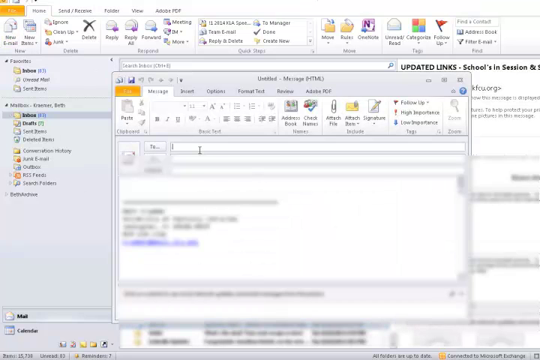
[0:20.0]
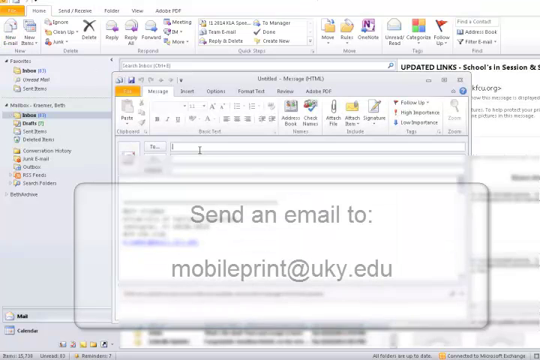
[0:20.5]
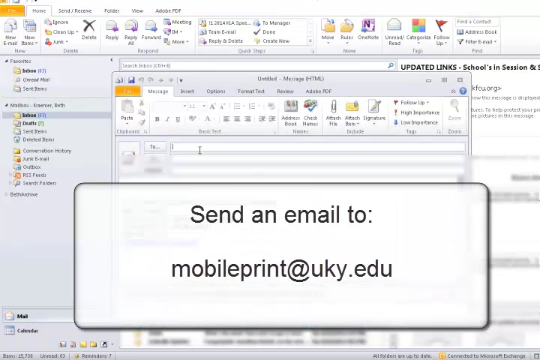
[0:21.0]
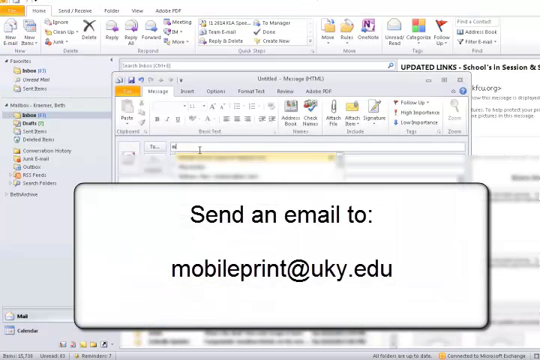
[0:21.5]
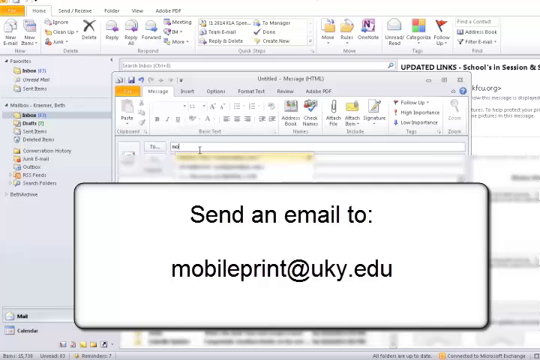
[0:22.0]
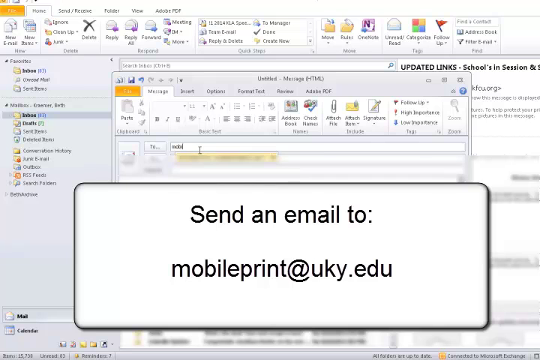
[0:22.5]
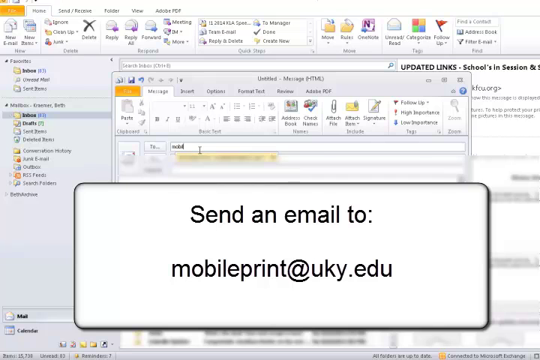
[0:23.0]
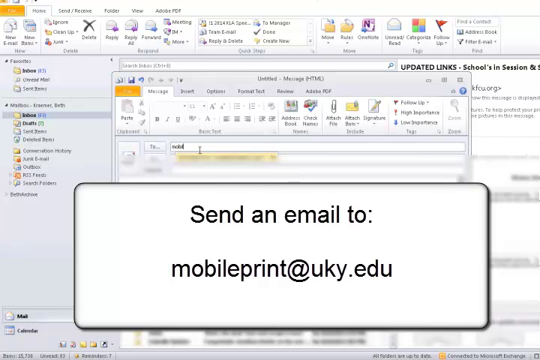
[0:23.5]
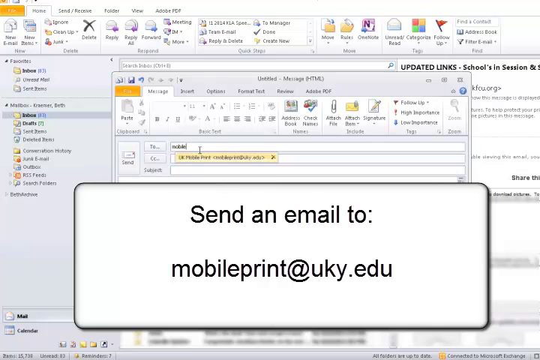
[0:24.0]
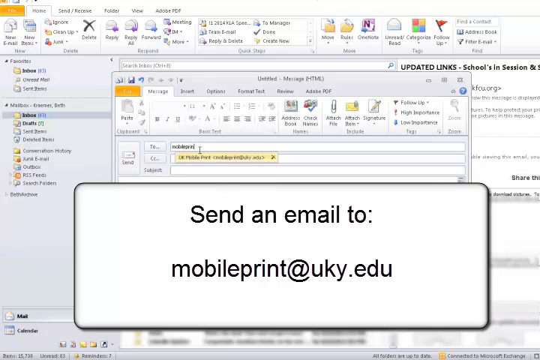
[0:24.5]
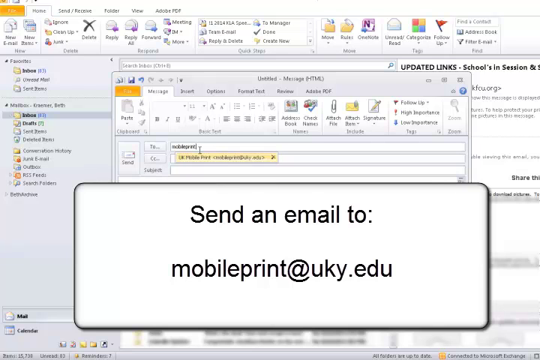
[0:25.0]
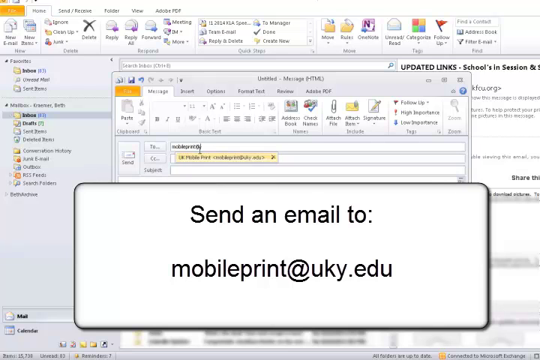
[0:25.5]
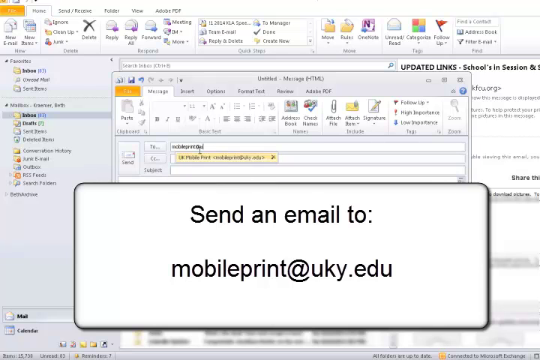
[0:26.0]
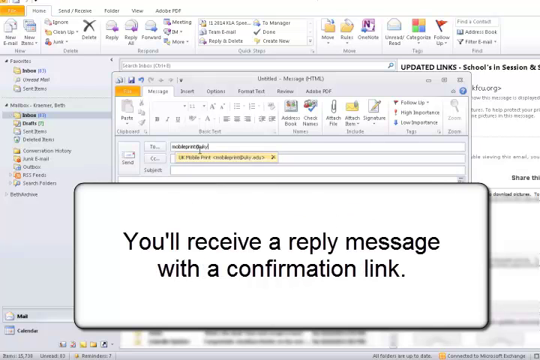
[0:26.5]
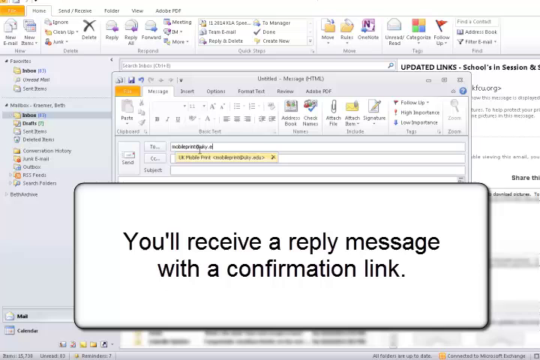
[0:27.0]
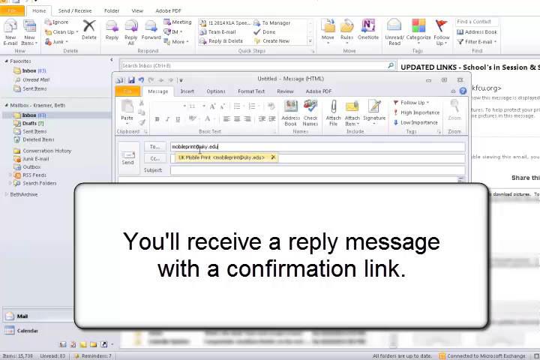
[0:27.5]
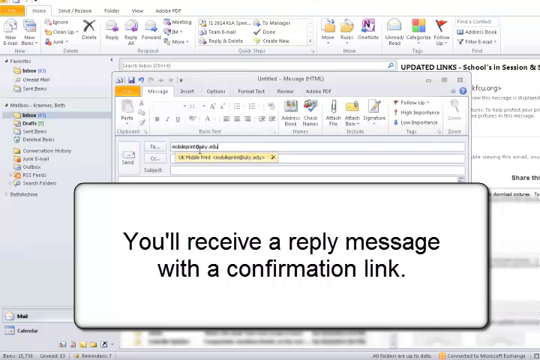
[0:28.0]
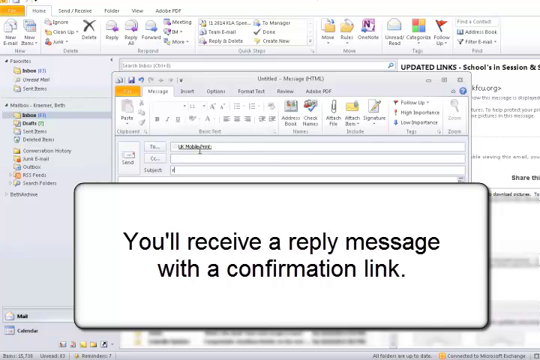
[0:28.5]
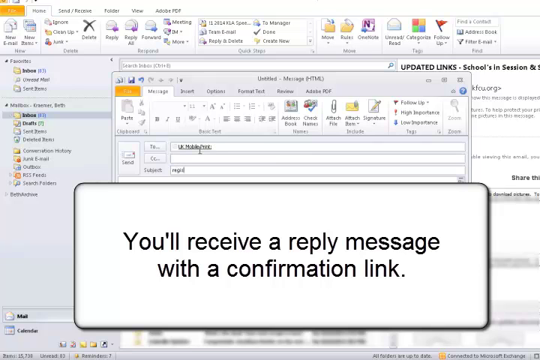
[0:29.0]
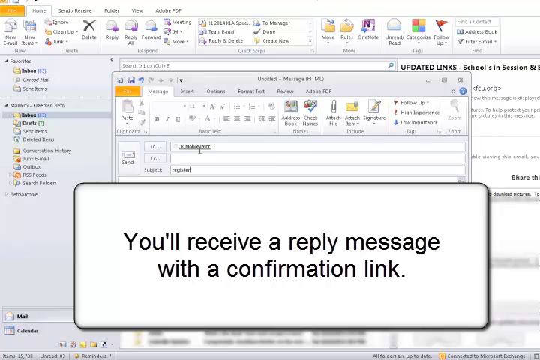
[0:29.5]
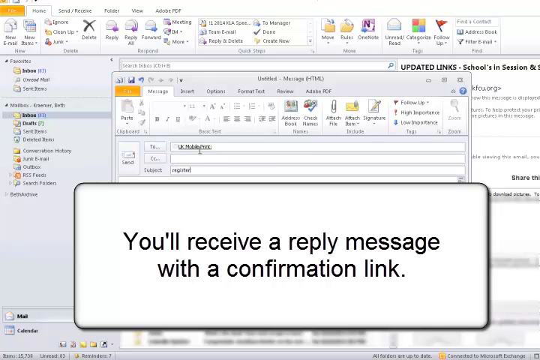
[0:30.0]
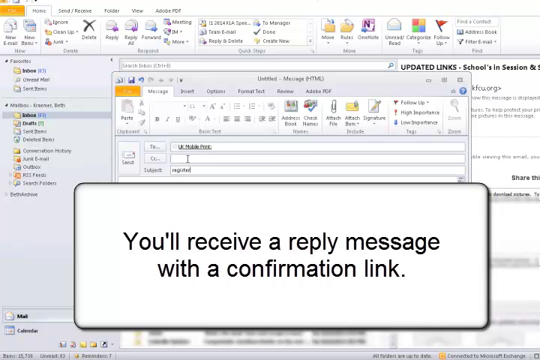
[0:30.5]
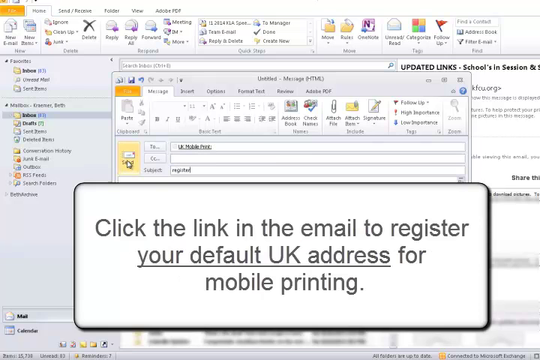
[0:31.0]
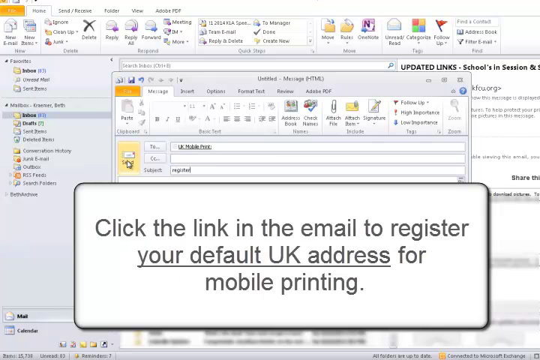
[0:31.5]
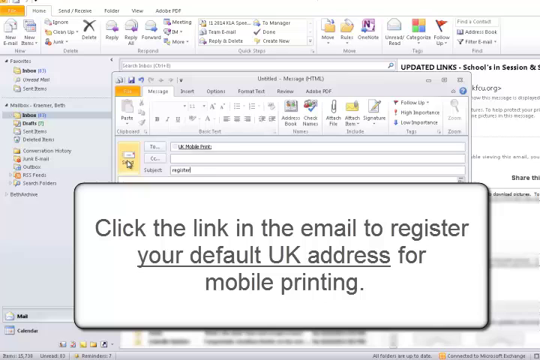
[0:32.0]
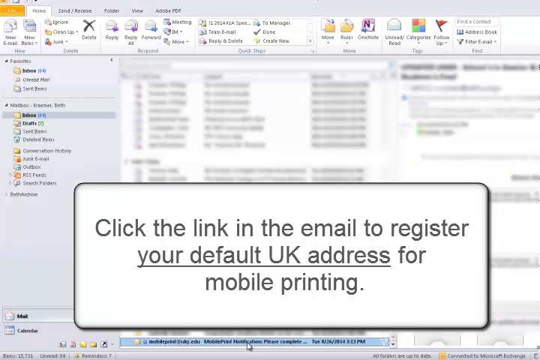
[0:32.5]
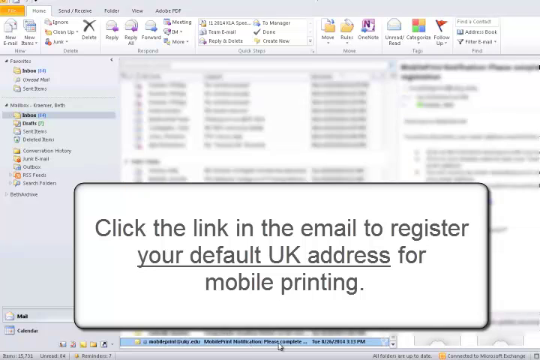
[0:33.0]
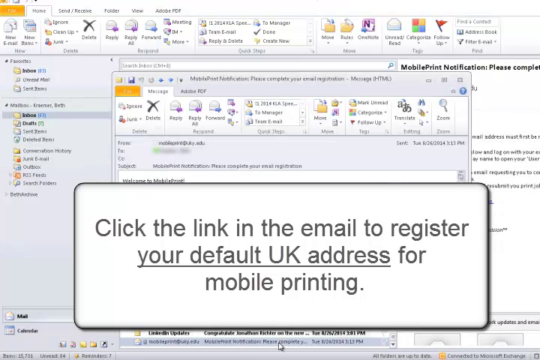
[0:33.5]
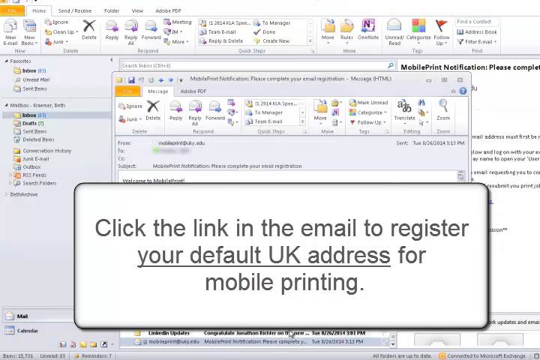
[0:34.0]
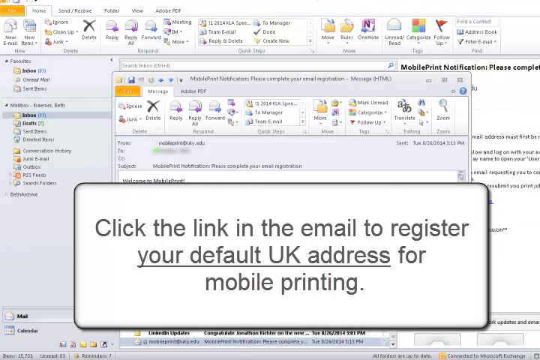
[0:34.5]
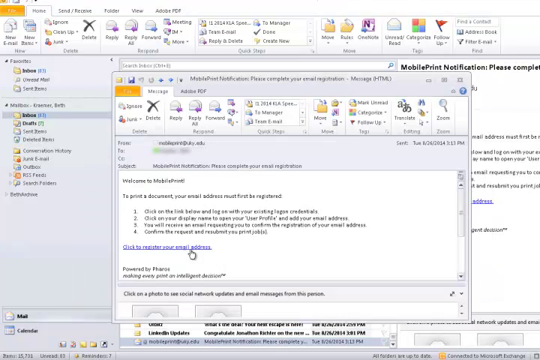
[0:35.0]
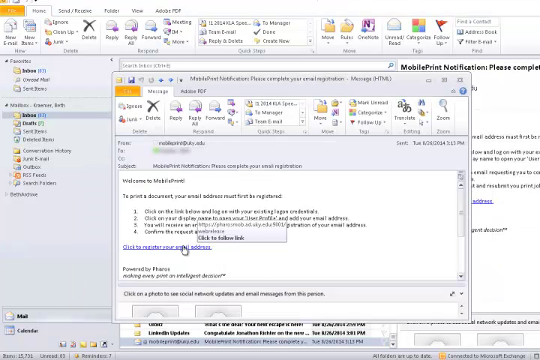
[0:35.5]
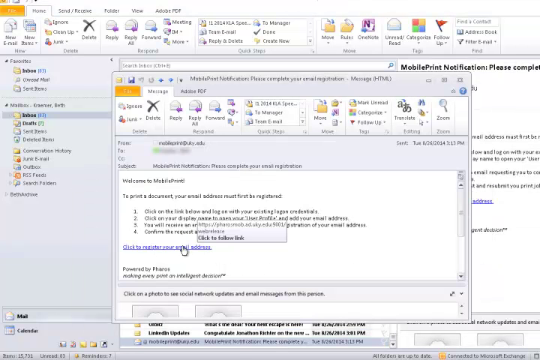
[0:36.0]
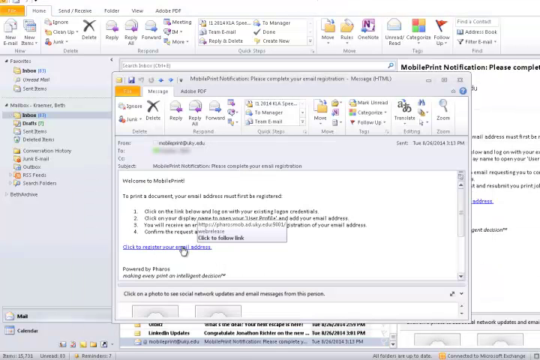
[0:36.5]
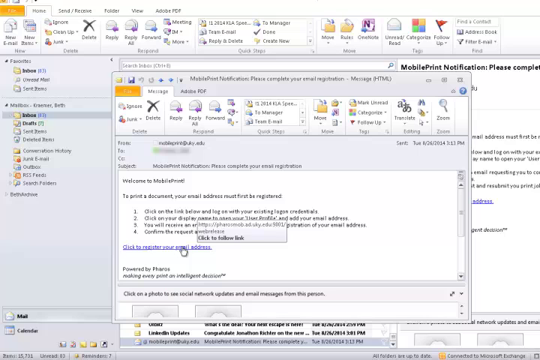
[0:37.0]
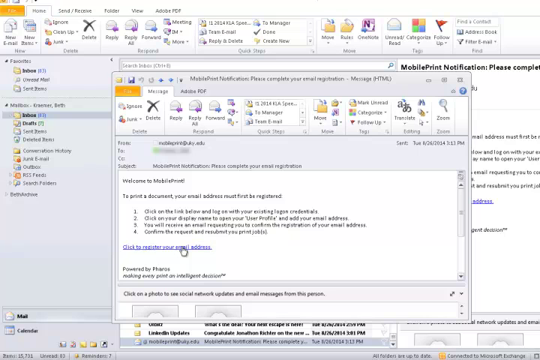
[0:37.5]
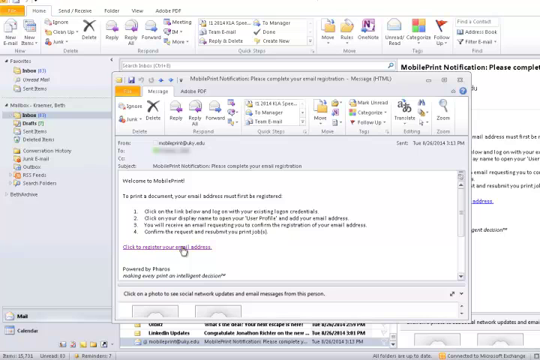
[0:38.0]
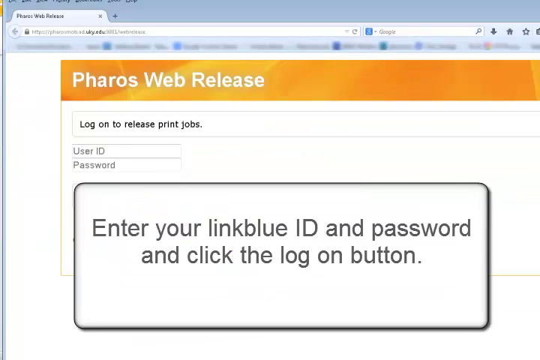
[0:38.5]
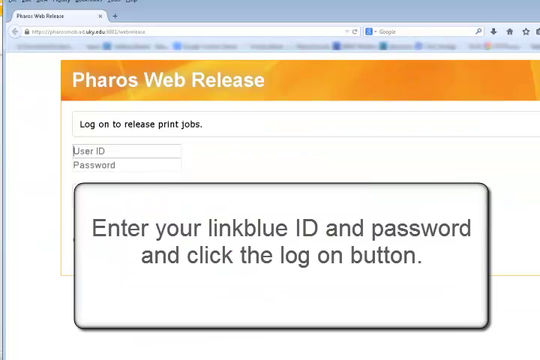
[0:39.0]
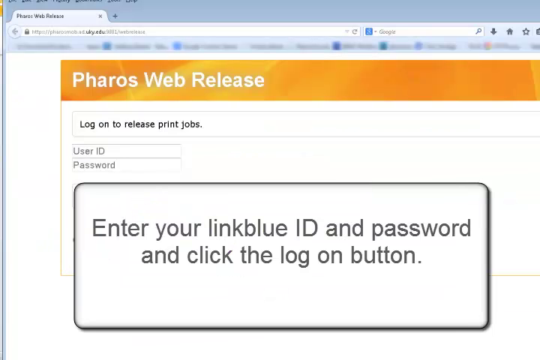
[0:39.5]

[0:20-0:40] The video demonstrates how to do mobile printing at the library of the University of Kentucky, starting with registering an email address. Someone is typing an email in a small white window; the "from" field is blurred out while the person types the "to" field. Text reads "send an email to mobileprint@uky.edu", and a banner-like box in front of it says "you'll receive a reply message with a confirmation link". The person enters the subject "register". Next the text reads "click the link in the email to register your default UK address for mobile printing", and the person clicks a blue link, something like "click here". Then the text reads "enter your link blue ID and password and click the log on button", with a big yellow banner at the top that says "Pharos release" or something similar. After that, the text "send an email to mobileprint@uky.edu" appears.